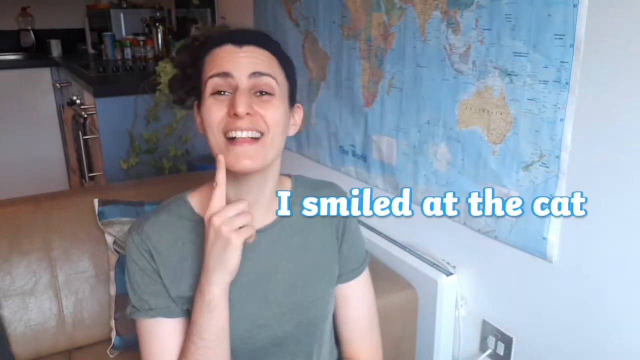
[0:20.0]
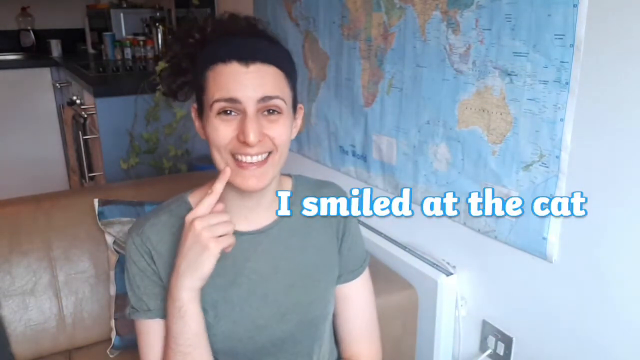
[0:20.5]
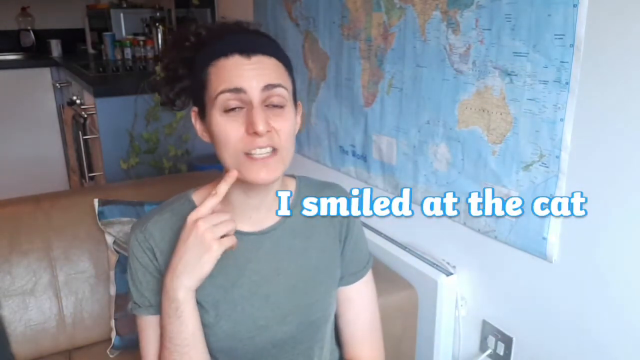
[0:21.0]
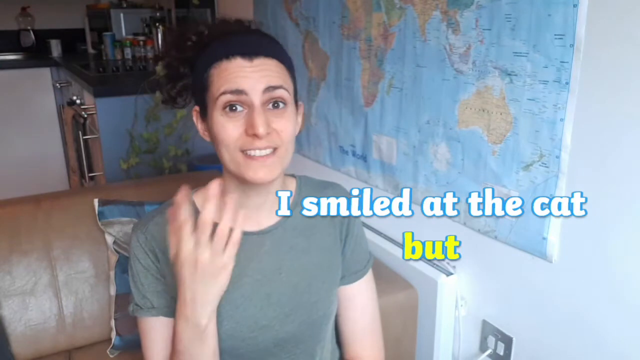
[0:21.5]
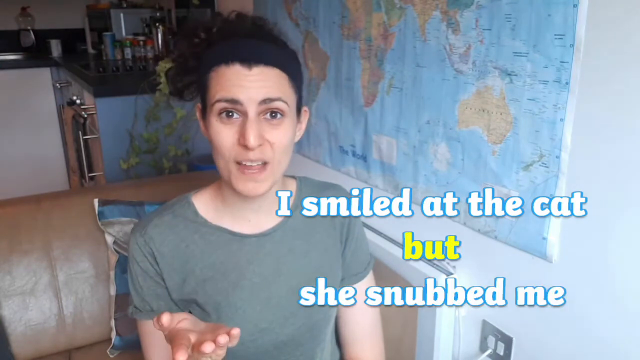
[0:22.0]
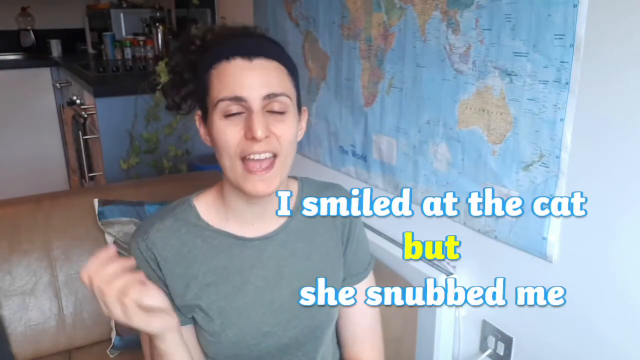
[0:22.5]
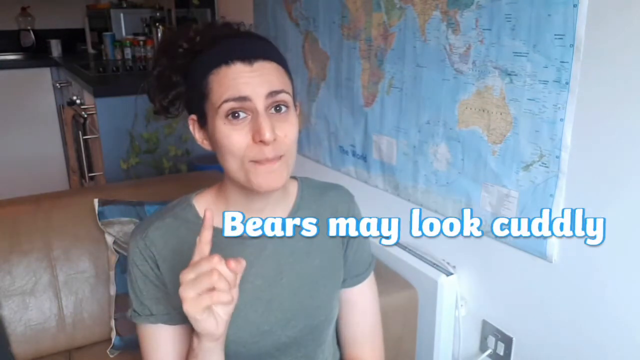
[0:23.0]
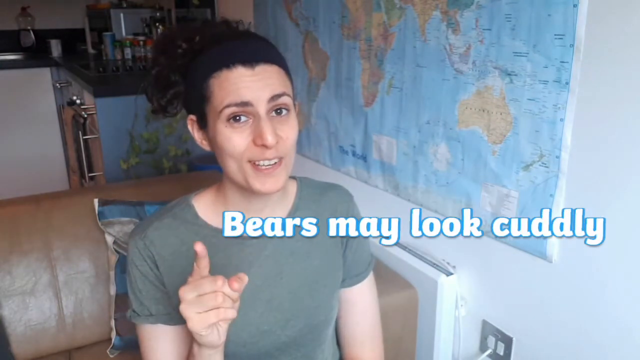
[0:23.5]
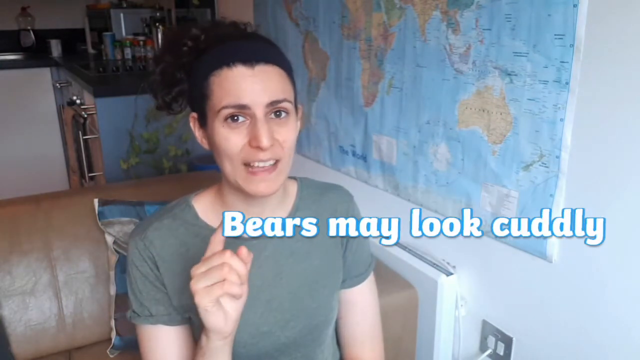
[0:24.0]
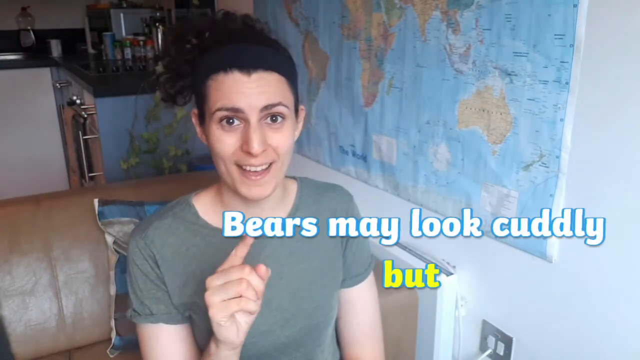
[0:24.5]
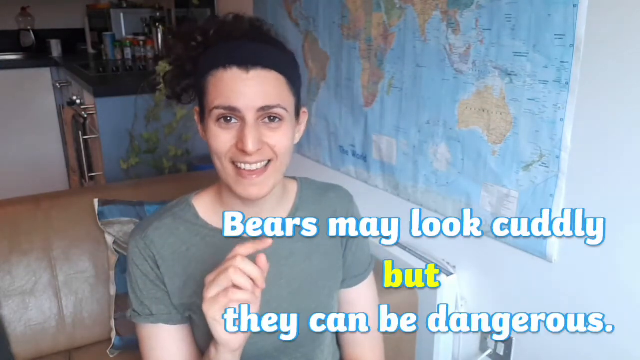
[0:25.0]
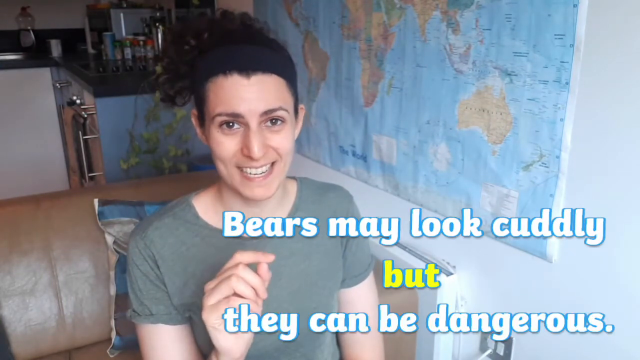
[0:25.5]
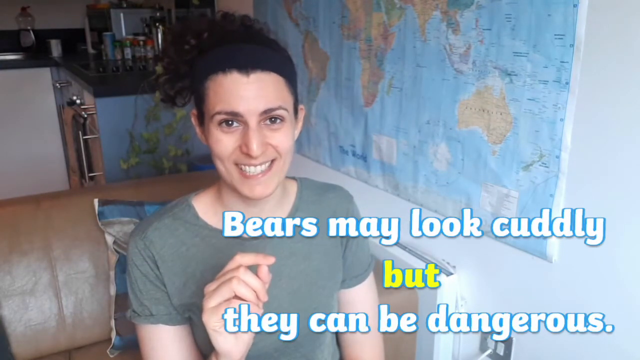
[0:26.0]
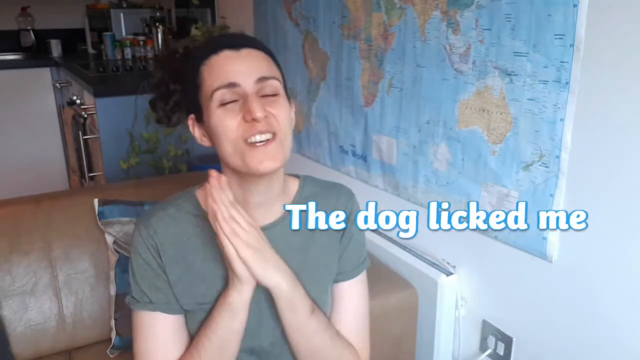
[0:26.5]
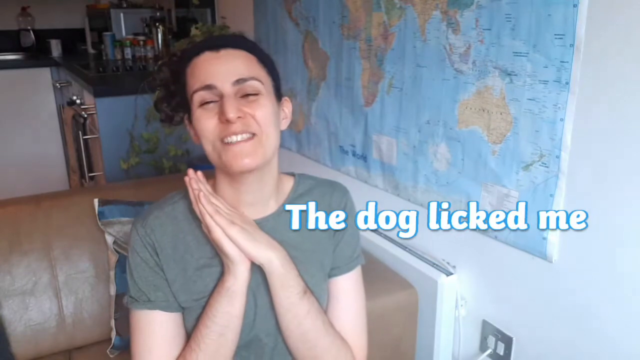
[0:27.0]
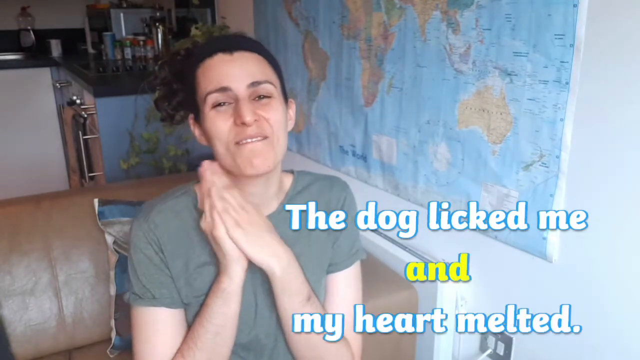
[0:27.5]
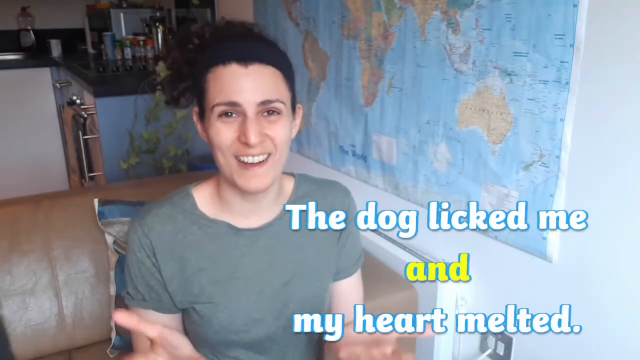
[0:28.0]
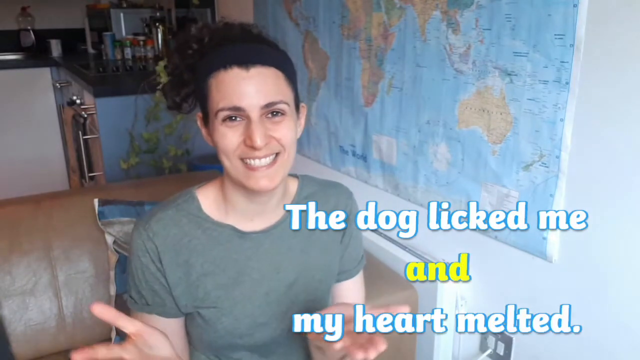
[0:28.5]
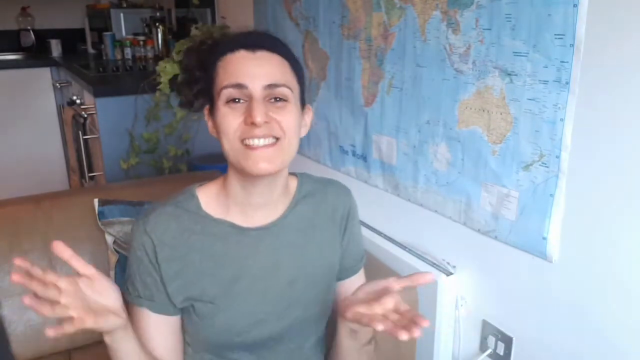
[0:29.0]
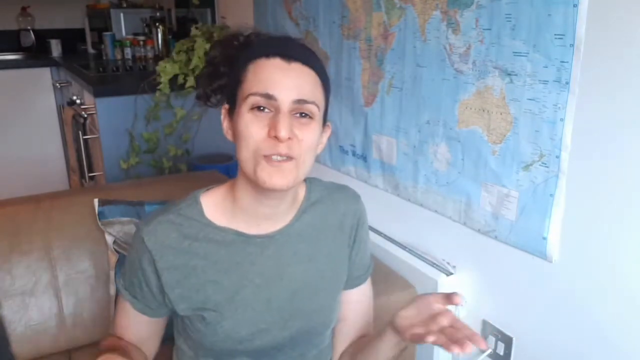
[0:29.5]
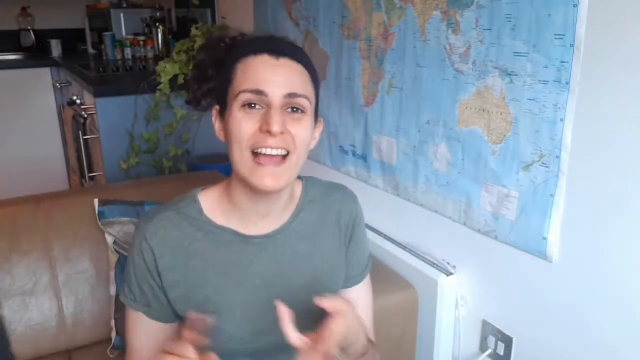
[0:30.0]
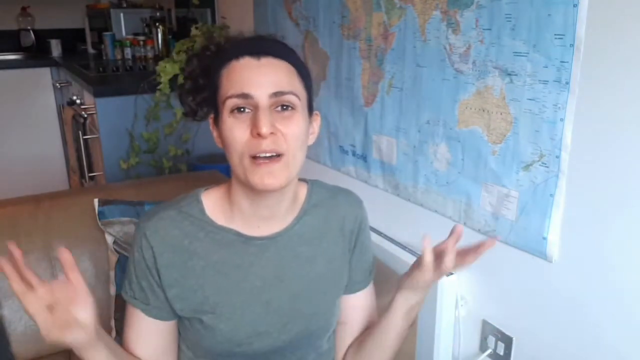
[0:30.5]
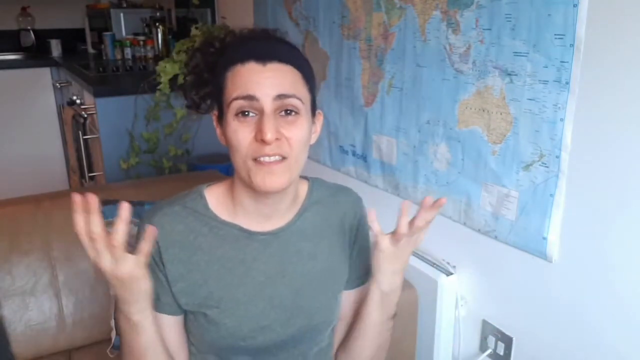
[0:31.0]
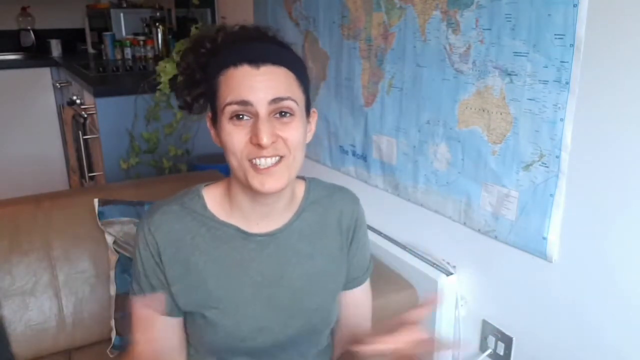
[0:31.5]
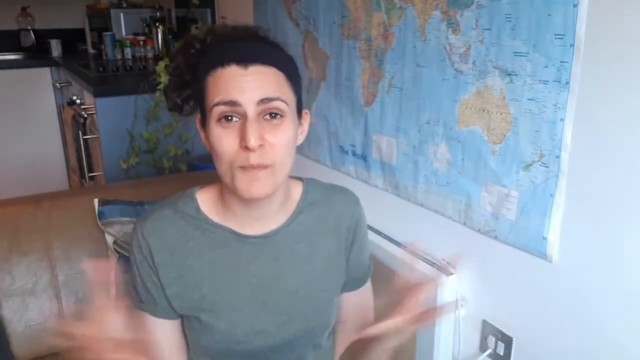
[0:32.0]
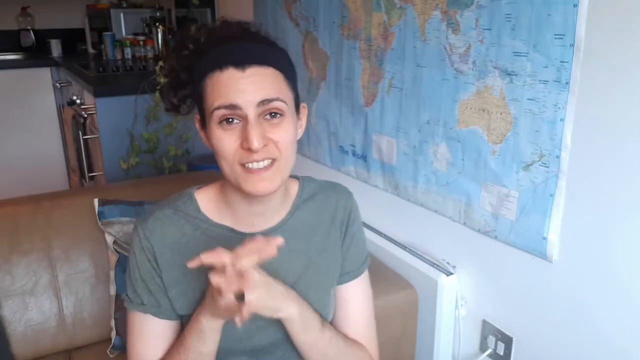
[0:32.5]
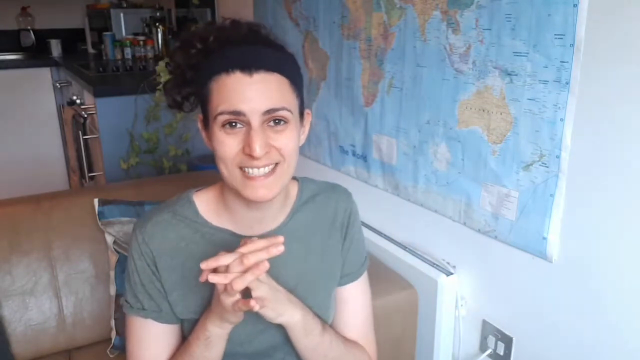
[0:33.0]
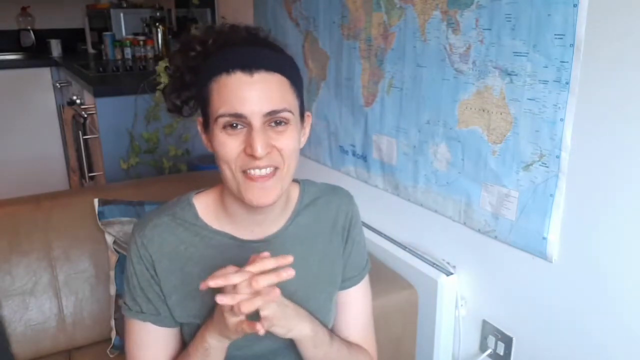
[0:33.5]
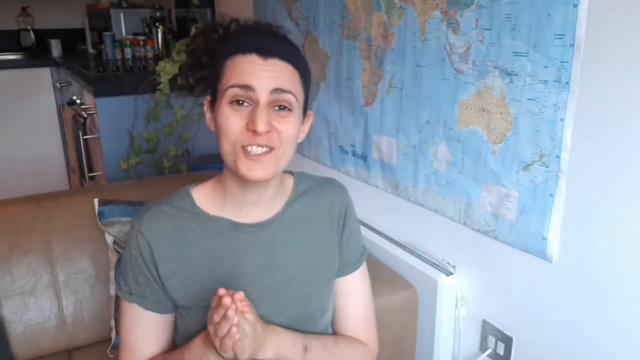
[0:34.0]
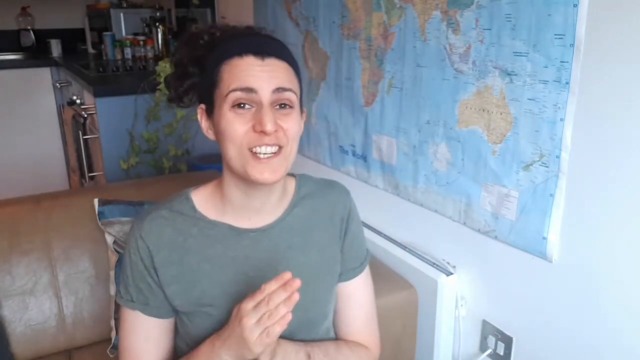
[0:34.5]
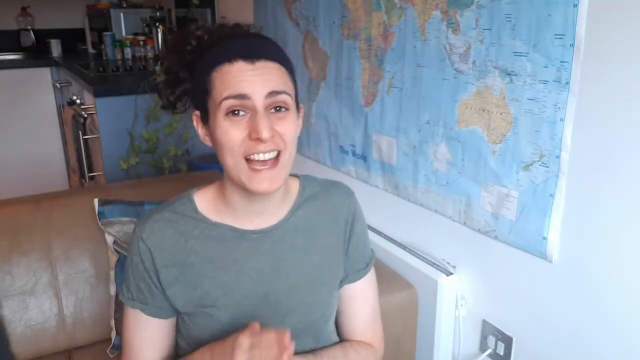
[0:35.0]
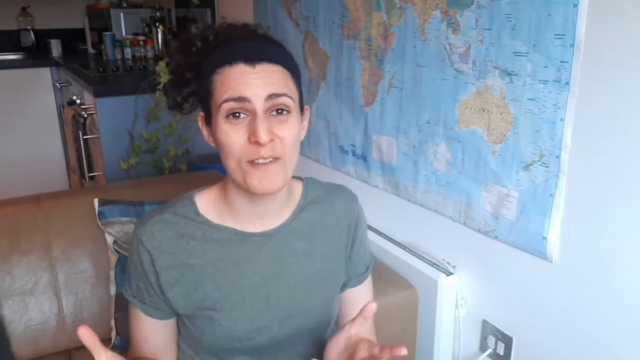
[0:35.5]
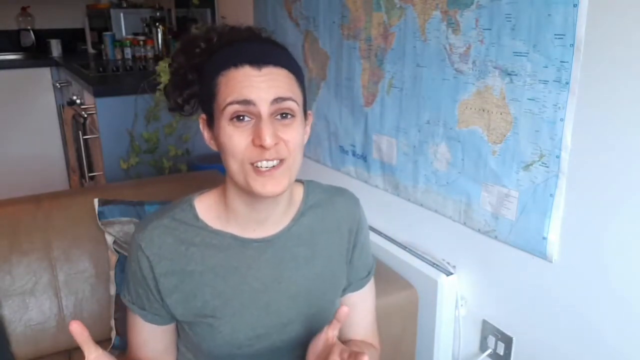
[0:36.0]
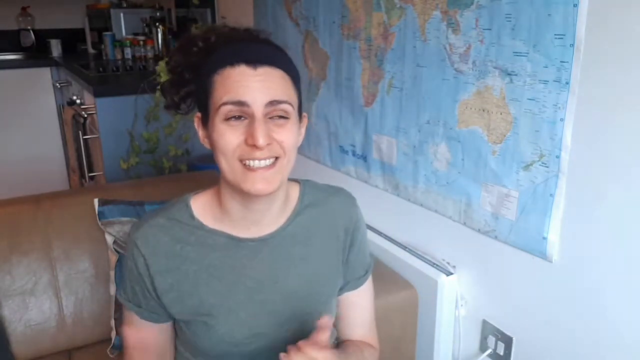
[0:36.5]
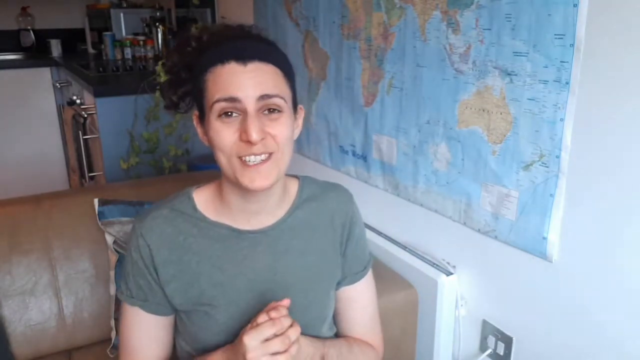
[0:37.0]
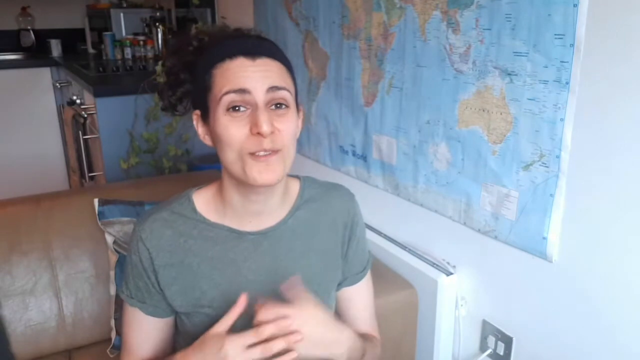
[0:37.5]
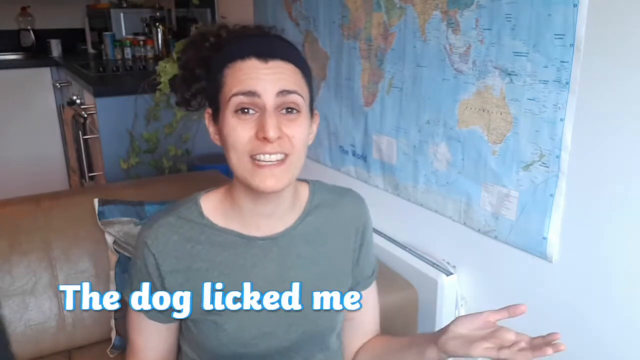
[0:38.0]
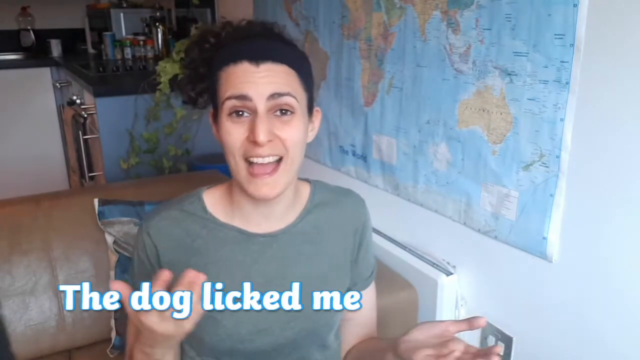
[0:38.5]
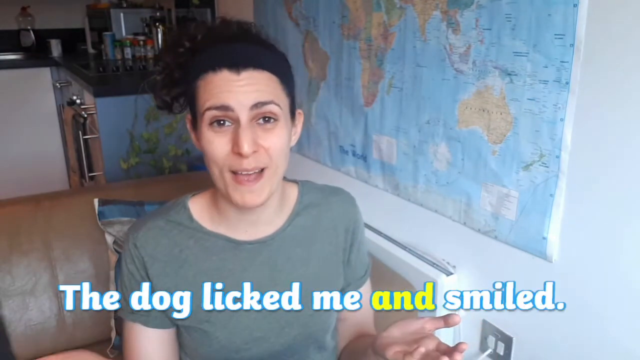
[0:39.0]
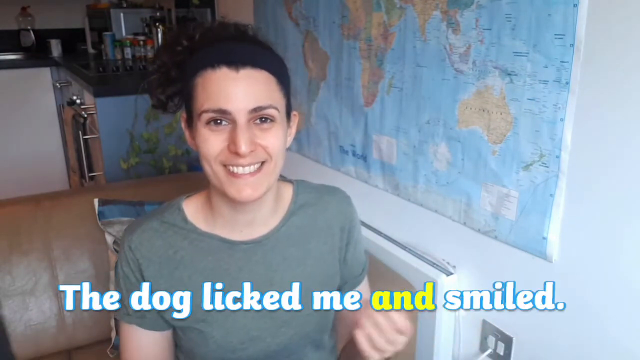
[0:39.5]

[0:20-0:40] The sentence "I smiled at the cat" appears in white letters with a lighter blue outline. The woman points with her right hand, and then the word "but" appears in yellow, followed by "she snubbed me." Another sentence follows: "Bears may look cuddly, but they can be dangerous," with "bears may look cuddly" in white. Then she says, "the dog licked me and my heart melted," putting her hands together as she talks. Next comes "the dog licked me and smiled."